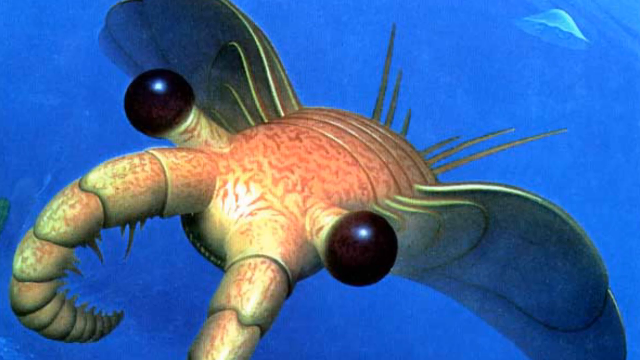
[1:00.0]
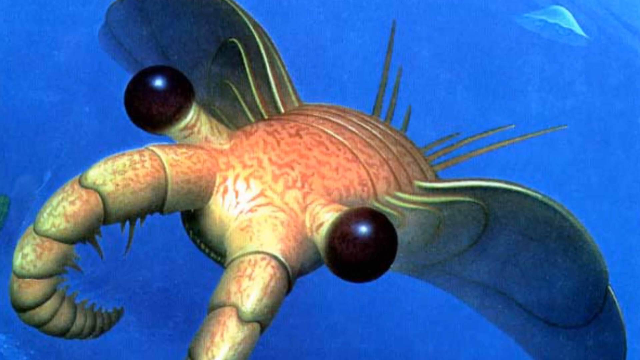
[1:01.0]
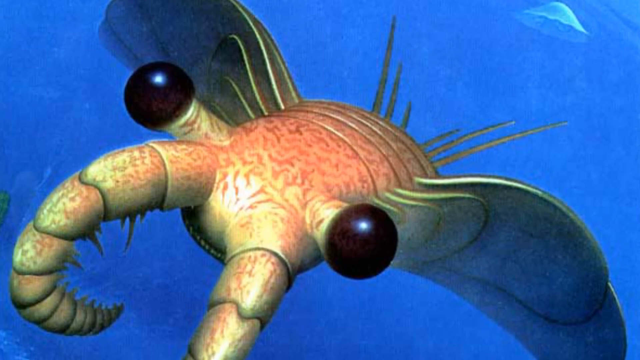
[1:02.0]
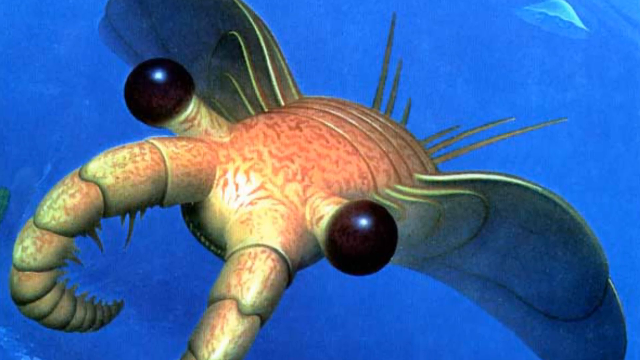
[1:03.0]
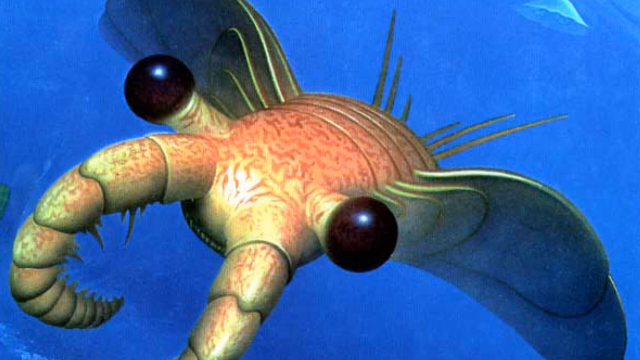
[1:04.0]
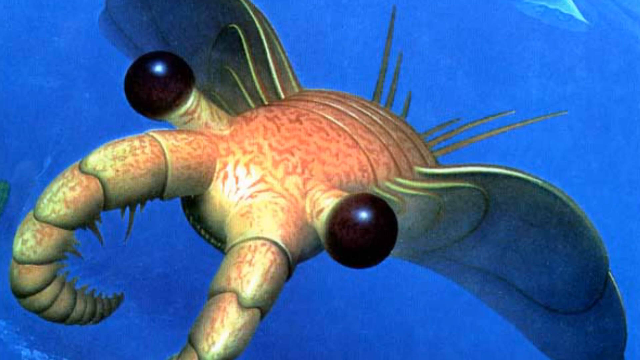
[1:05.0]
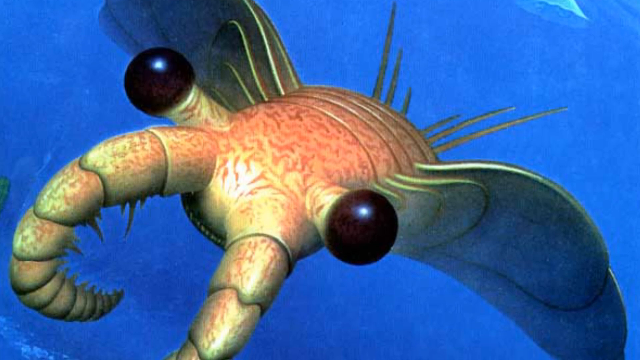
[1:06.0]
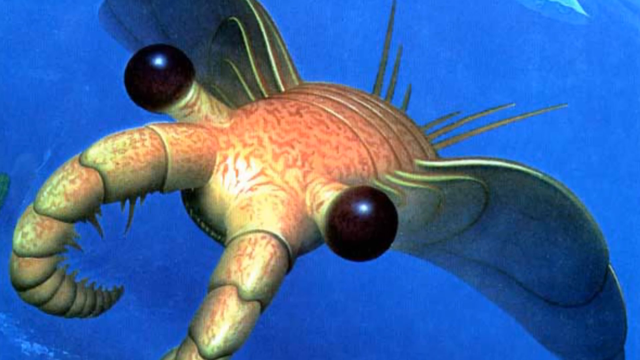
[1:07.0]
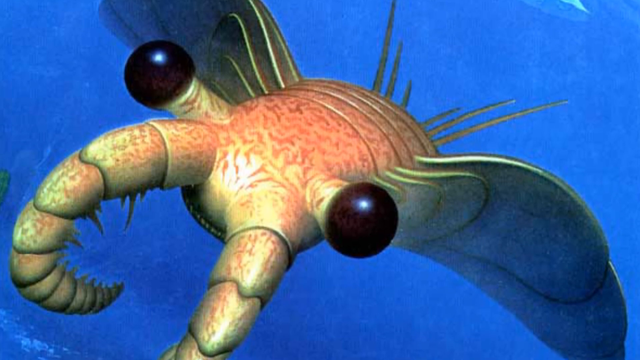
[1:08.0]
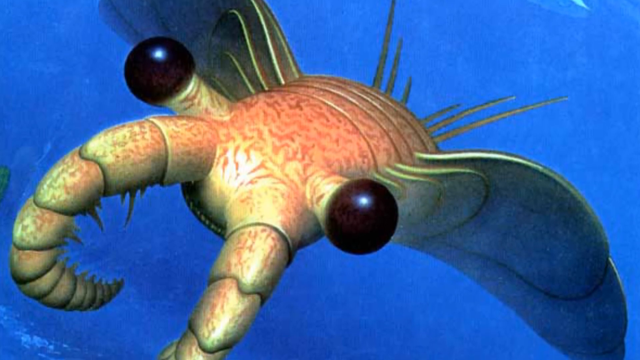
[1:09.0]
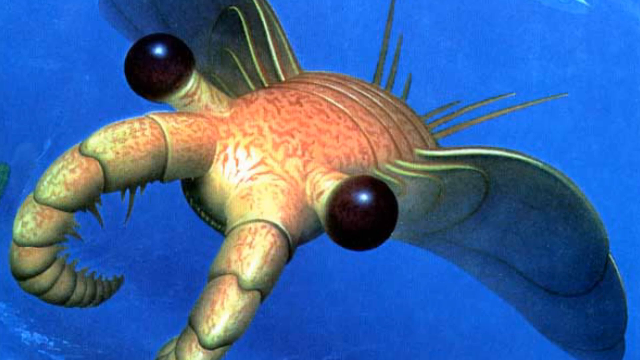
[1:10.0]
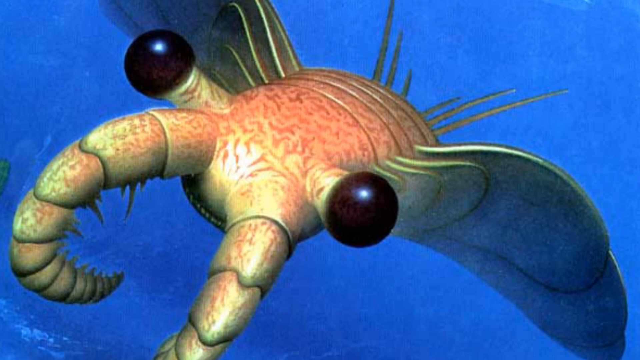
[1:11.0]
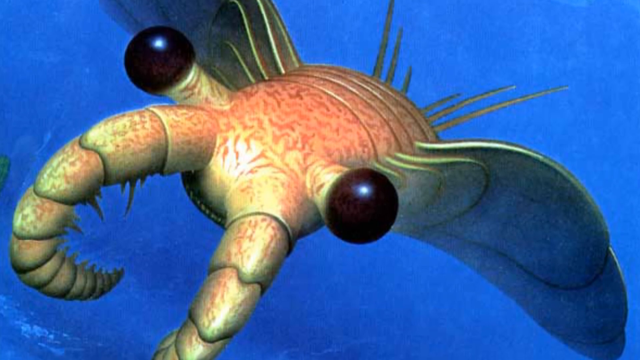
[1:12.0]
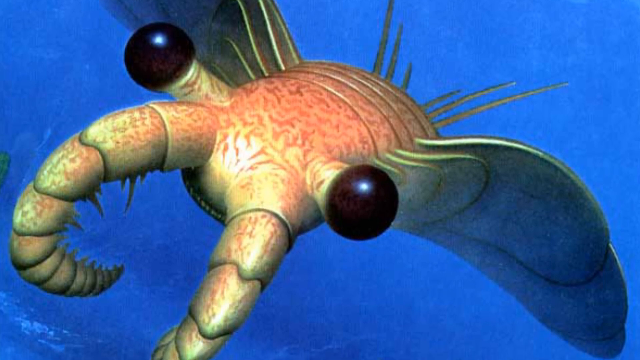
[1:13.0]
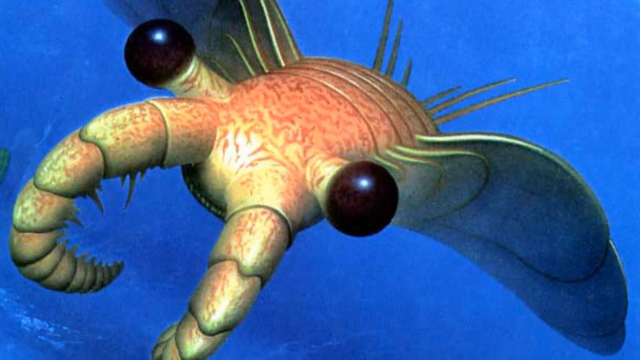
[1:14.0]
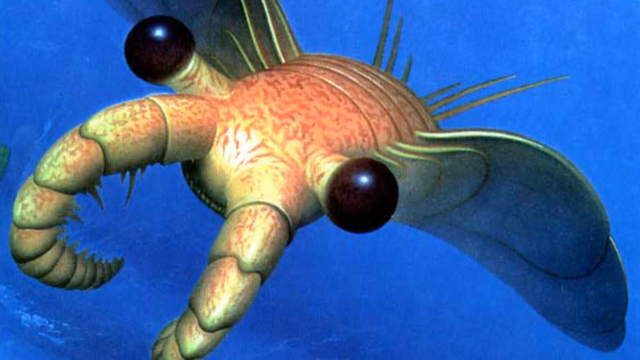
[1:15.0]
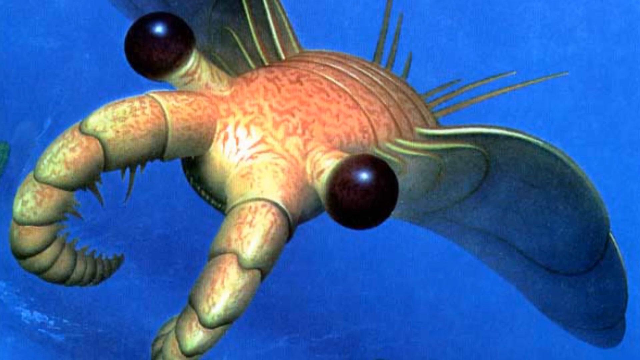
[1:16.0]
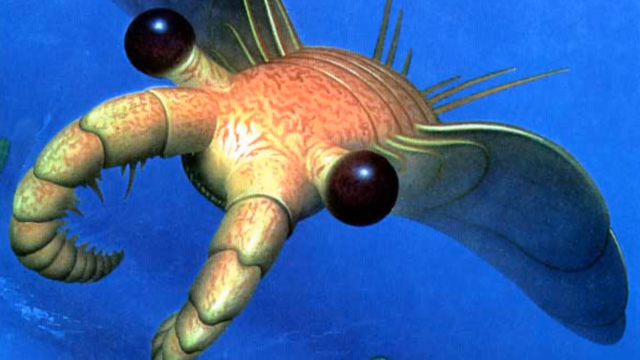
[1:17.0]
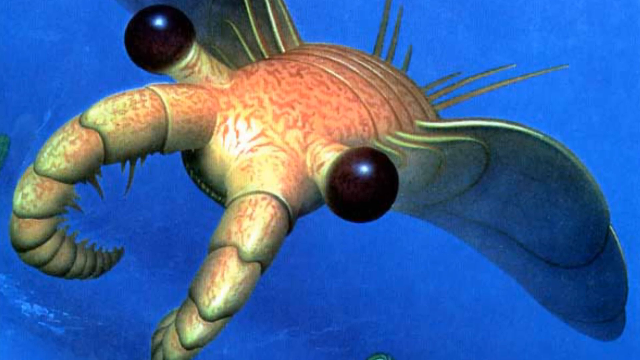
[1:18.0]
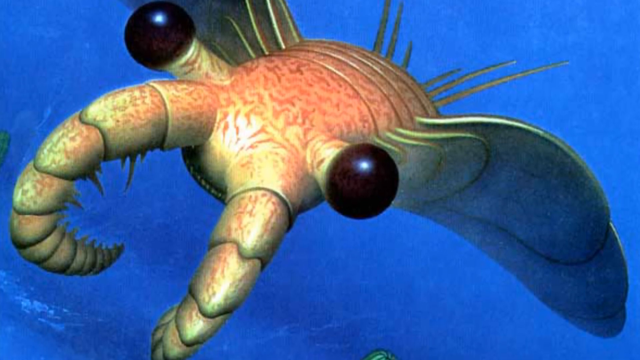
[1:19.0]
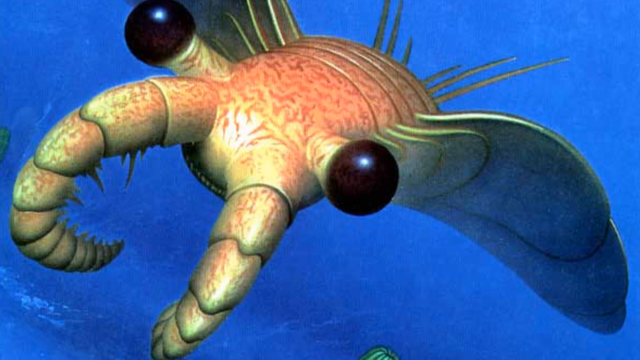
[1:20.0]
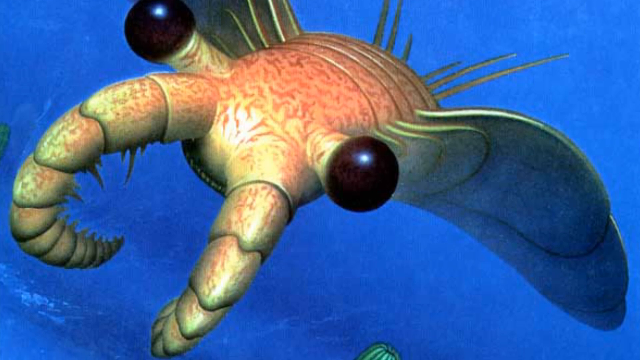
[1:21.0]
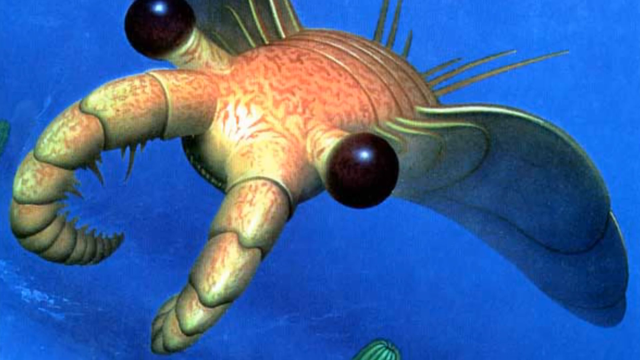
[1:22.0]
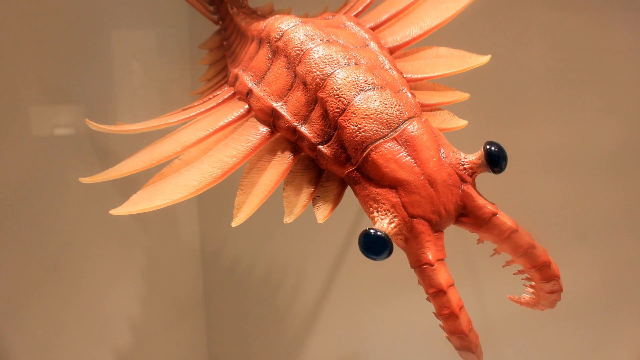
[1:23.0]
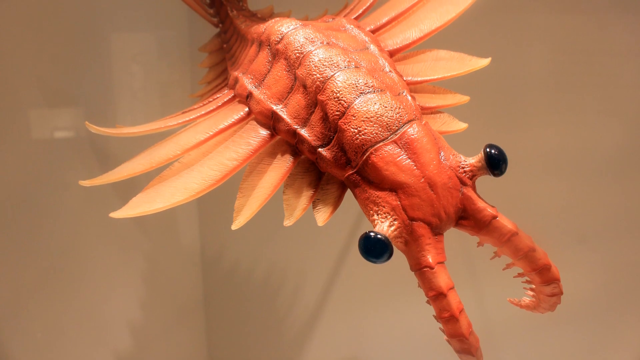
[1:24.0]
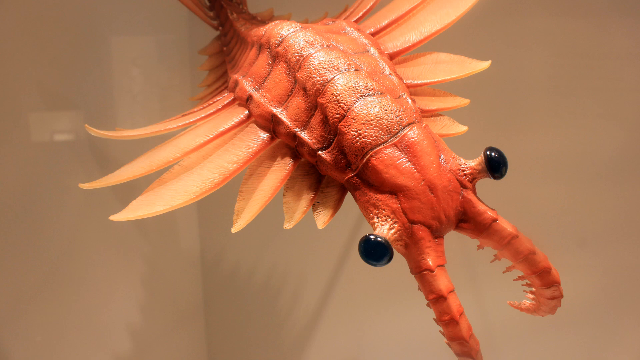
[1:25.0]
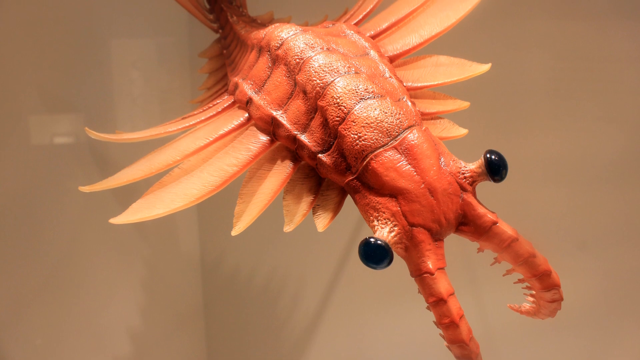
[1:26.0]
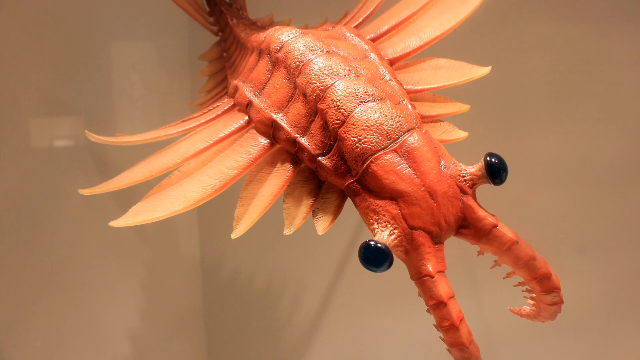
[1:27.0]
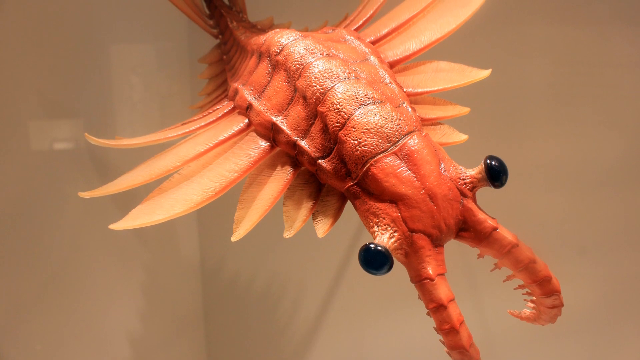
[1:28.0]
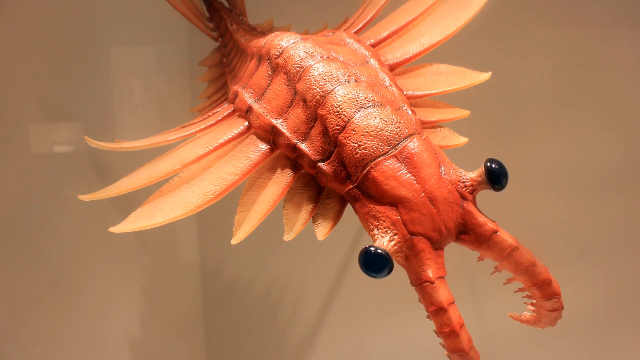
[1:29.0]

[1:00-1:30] A sea creature appears to be swimming through the bottom of the sea toward the sea floor. In a close-up, it has two round black eyes on either side of its head, which appear to grow from tentacles attached to the sides of its head. Two horns or fangs grow out of its face, and small sharp teeth line its mouth. Lines on its back presumably represent the sections of its body. It has fins on either side of its body, at least four, which are smaller toward the front and gradually get bigger toward the back. Its tail is made up of six sections. The creature is yellow, green, orange, and red, and bright crystal blue water surrounds it. Next, a different sea creature appears, possibly on display, since no water is visible around it. It is yellow, orange, and red, and it looks like the same sea creature seen before, apparently taken from the sea and on display inside a laboratory.